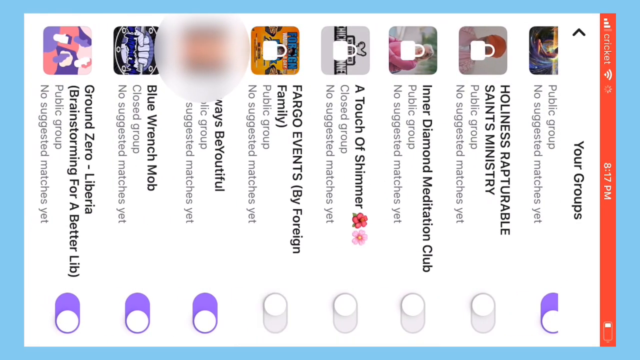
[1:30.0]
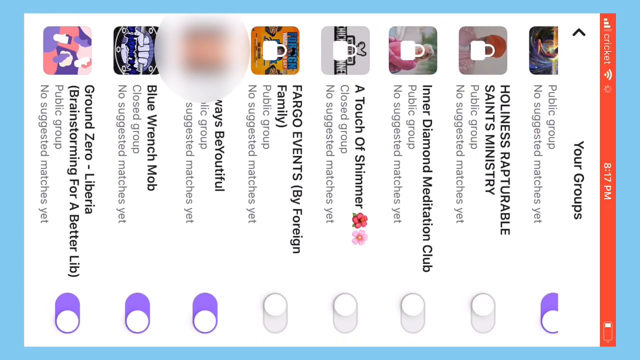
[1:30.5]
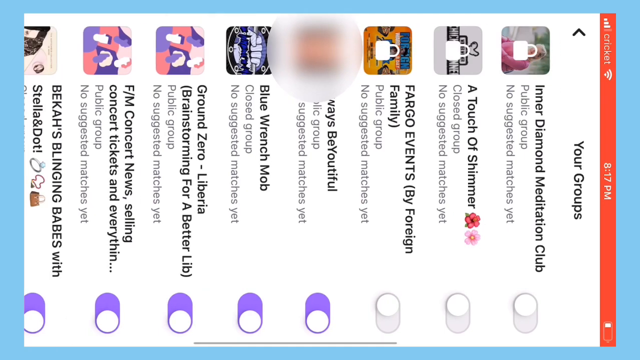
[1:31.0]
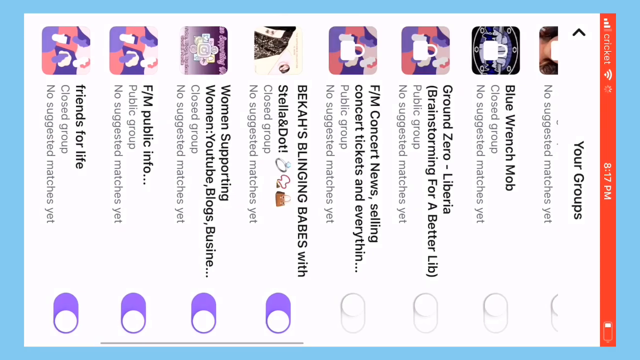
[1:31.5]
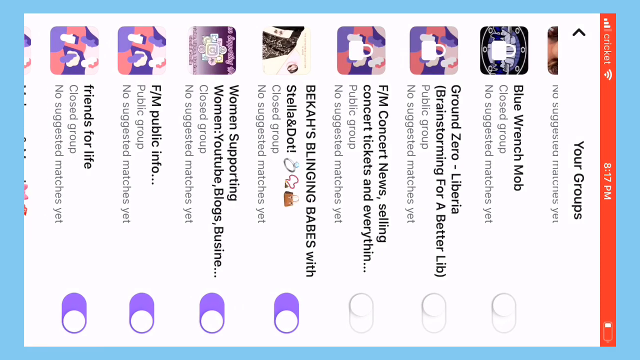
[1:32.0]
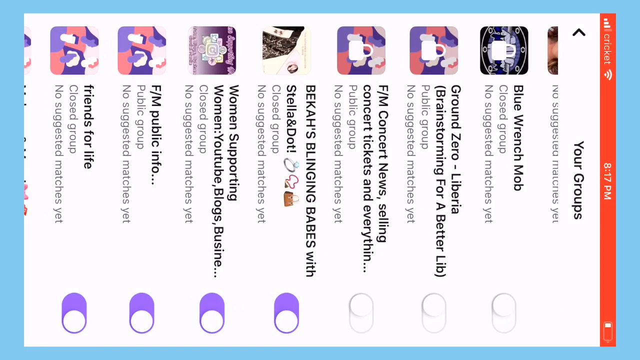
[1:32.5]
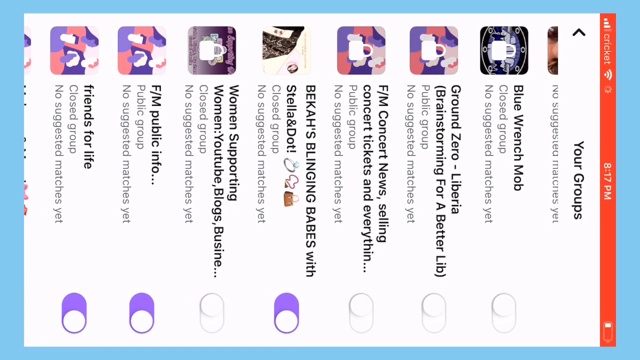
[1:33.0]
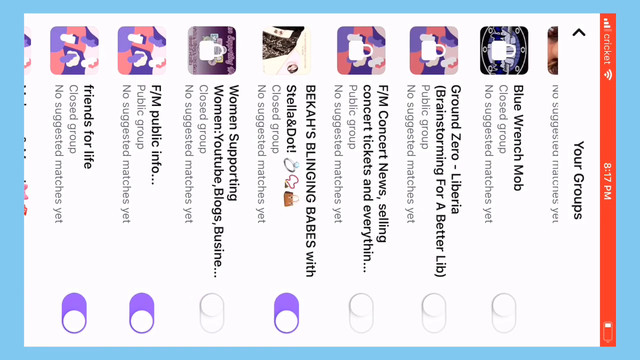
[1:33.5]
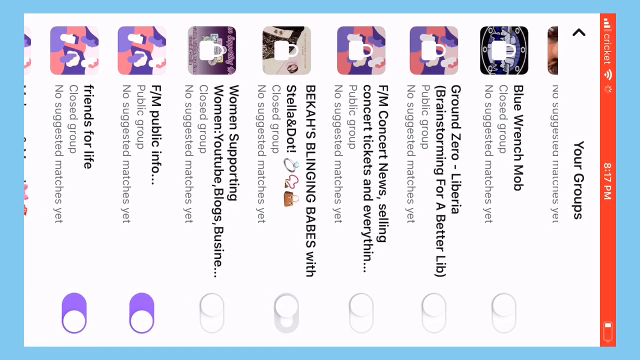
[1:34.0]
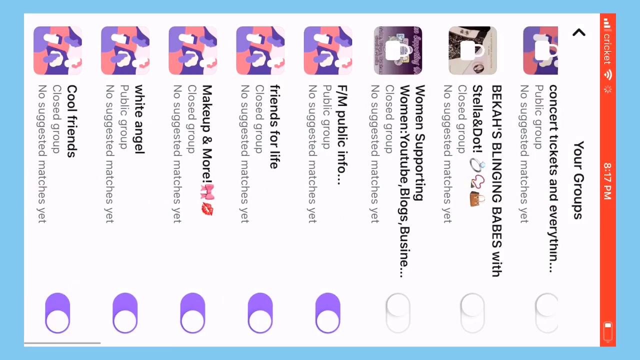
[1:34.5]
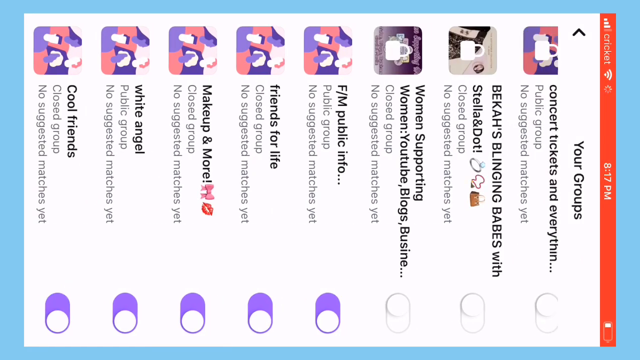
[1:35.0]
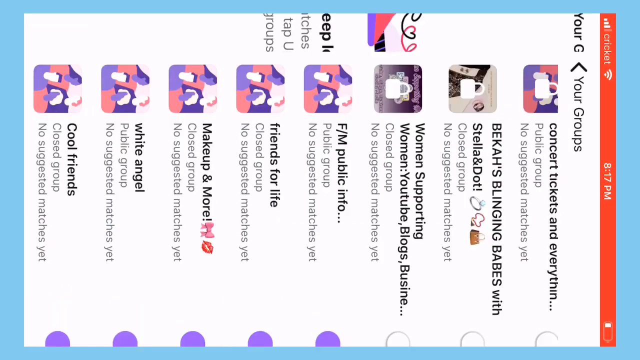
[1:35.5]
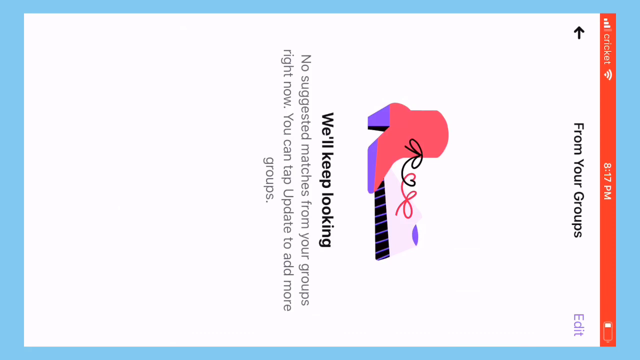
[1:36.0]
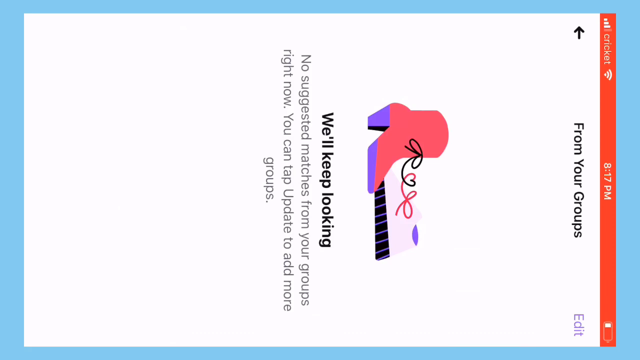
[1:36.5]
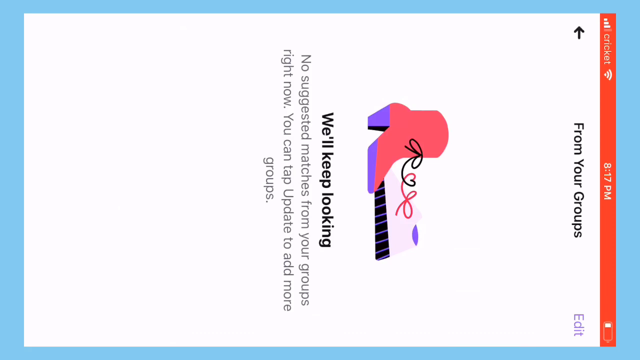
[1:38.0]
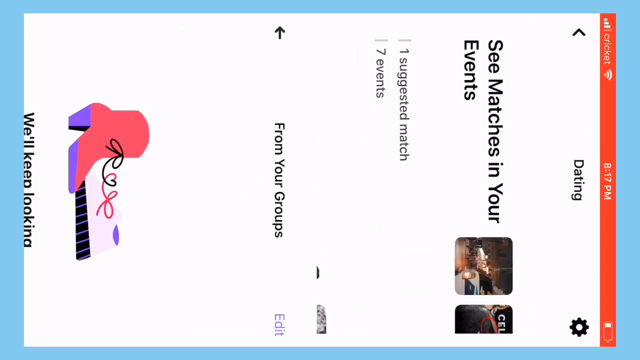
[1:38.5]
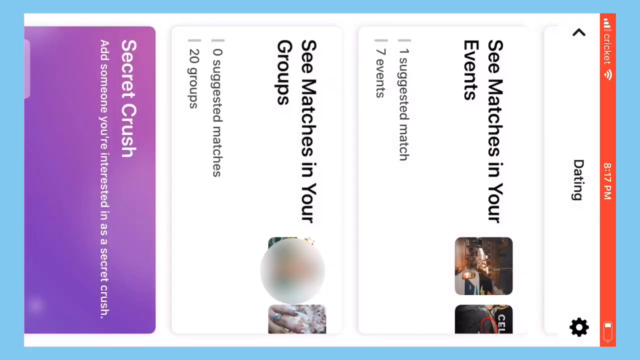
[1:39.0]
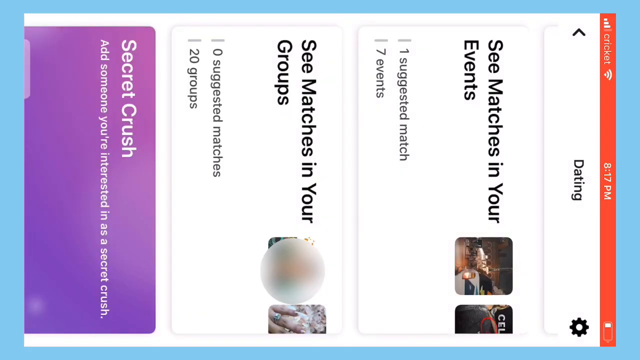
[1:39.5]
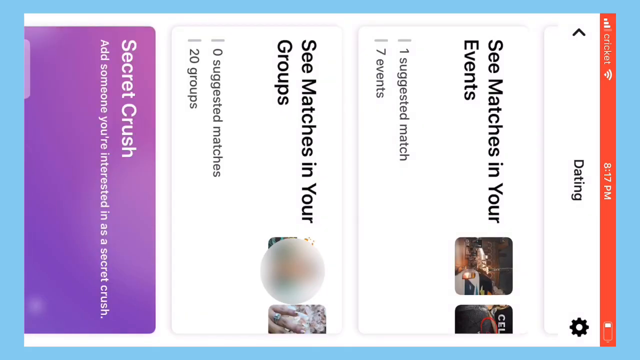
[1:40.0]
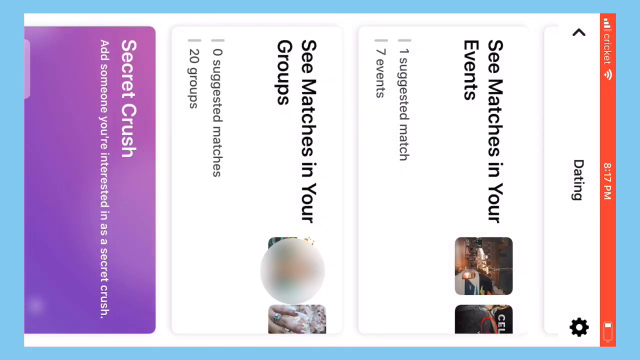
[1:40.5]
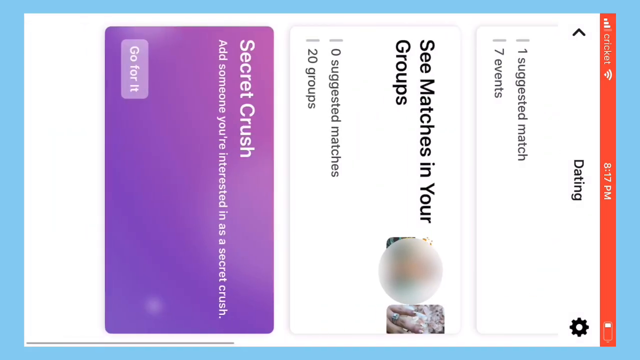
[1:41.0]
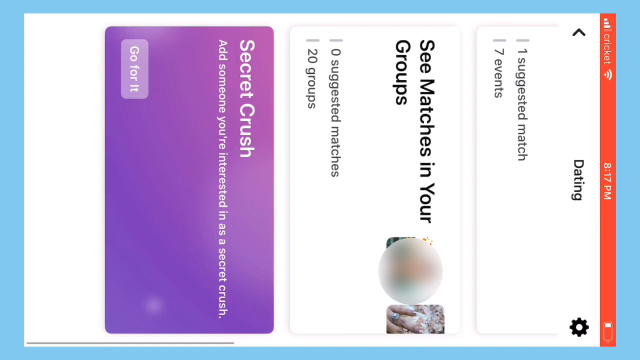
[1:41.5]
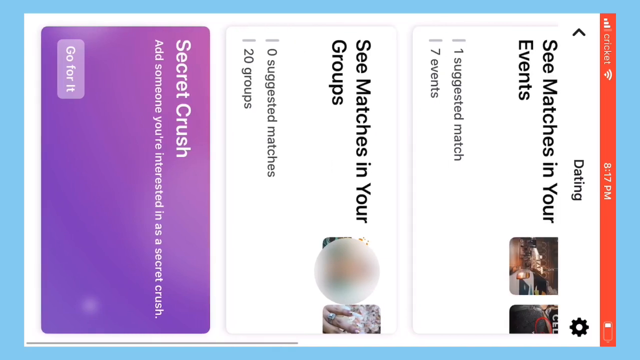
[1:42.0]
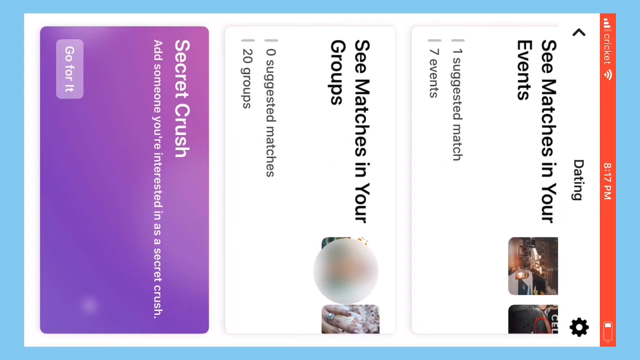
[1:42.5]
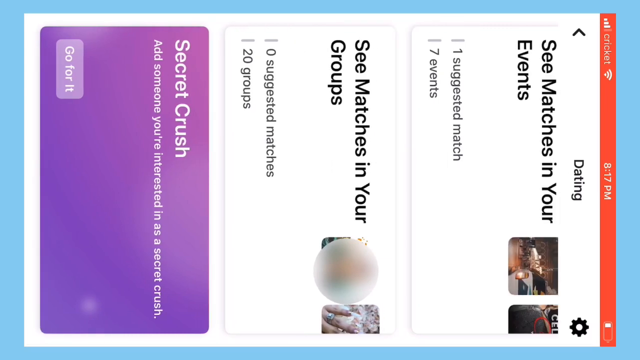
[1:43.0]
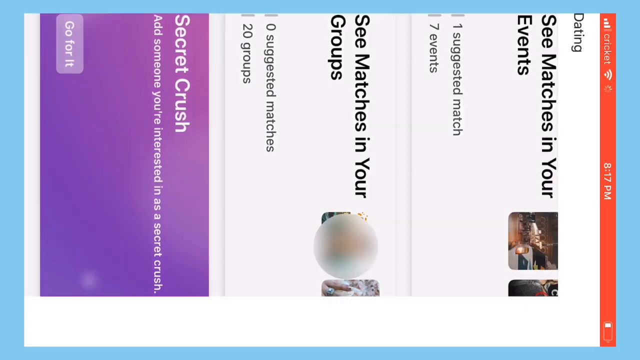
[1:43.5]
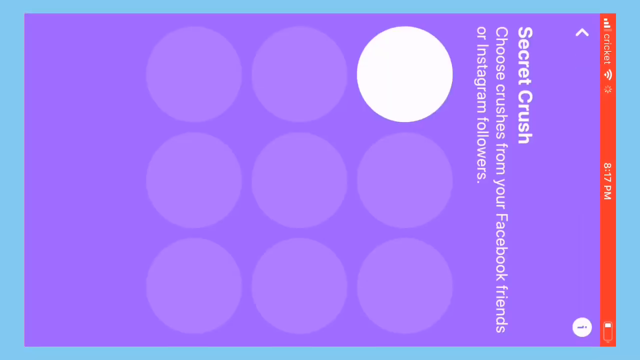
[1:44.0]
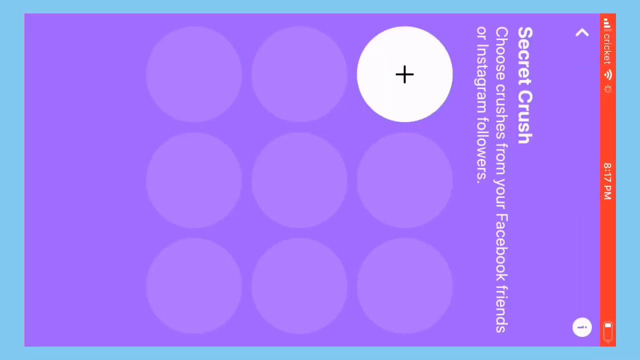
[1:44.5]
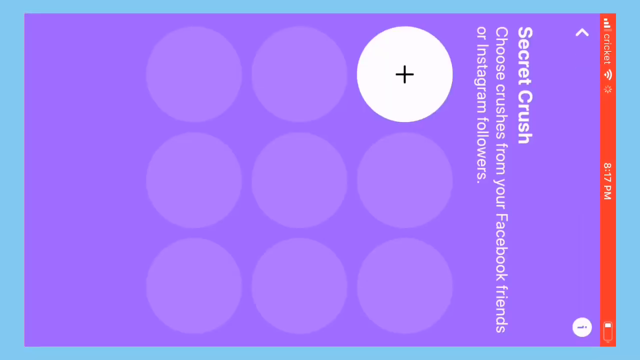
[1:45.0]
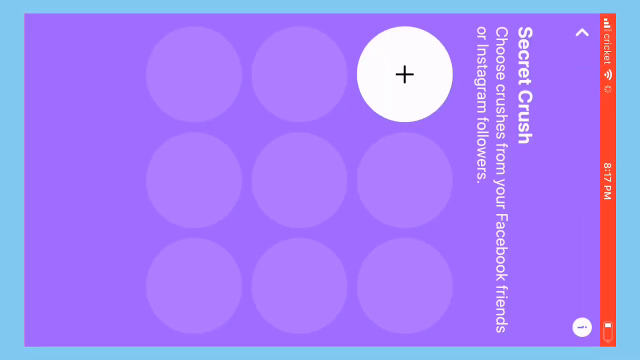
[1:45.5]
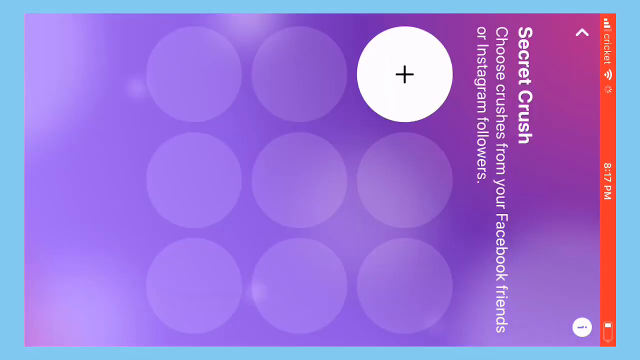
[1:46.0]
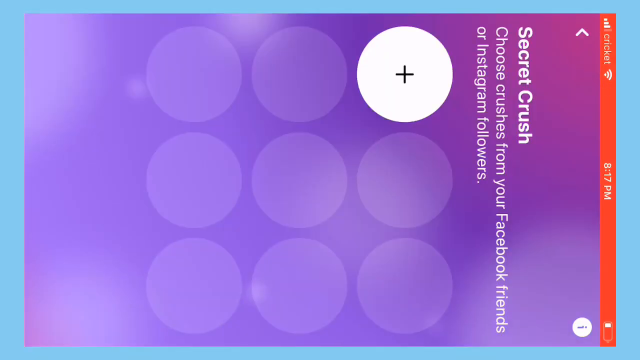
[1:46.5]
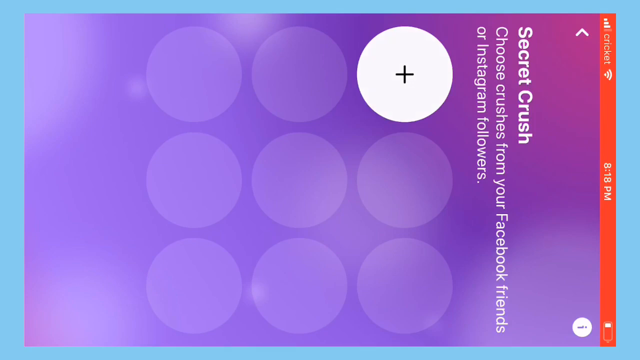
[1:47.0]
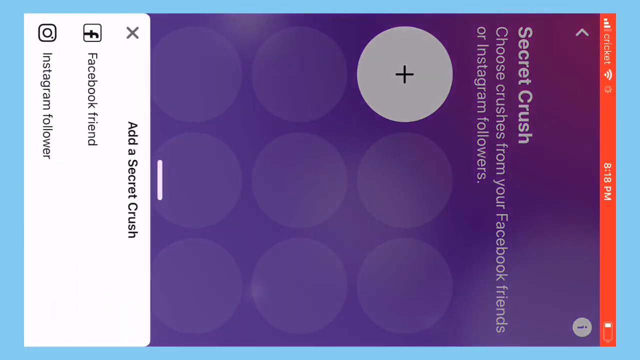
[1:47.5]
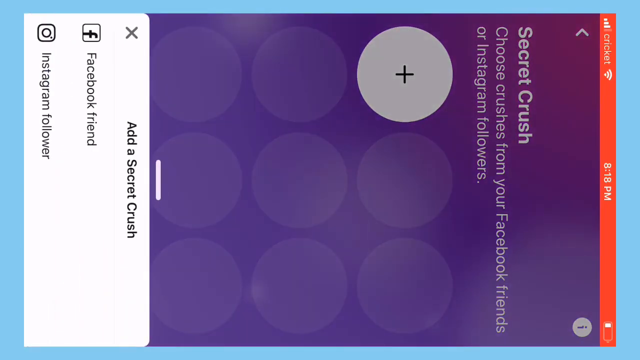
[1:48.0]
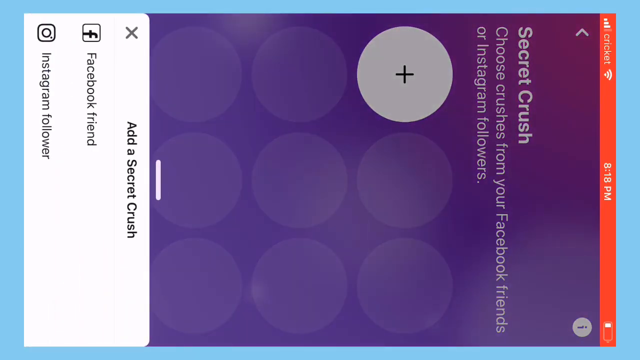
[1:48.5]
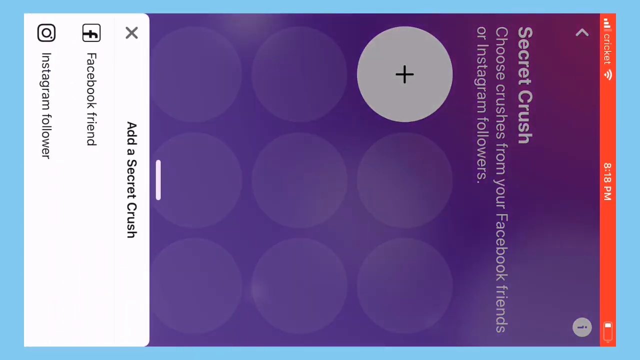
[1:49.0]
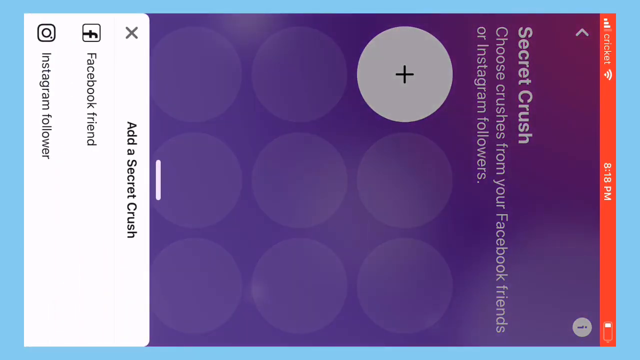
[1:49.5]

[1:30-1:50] A phone screen recorded in portrait mode is turned sideways so that the top is on the right side of the widescreen video. The groups someone is in on a dating app are shown: "Holiness Repturable Saints Ministry," "Inner Diamond Meditation Club," "A Touch of Shimmer," "Marco Events," "Always Be Beautiful," "Blue Wrench Mob," and "Ground Zero Liberia." The groups list is scrolled upward, appearing rightward in the video, and then back to the previous page, leftward on the phone and upward in the video, which reads "we'll keep looking. No suggestion matches from your groups right now. You can tap Update to add more groups." Scrolling up on the phone reveals a screen reading "Dating," "See matches in your events," "One suggestion match, seven events," "See matches in your groups," and "Zero suggestion matches, 20 groups." Further scrolling, rightward in the video, reveals a section at the very bottom reading "Secret Crush. Add someone you're interested in as a secret crush." After scrolling up and to the right on the phone, which appears downward in the video, the screen turns purple, with text at the top reading "Secret Crush. Choose crushes from your Facebook friends or Instagram followers."